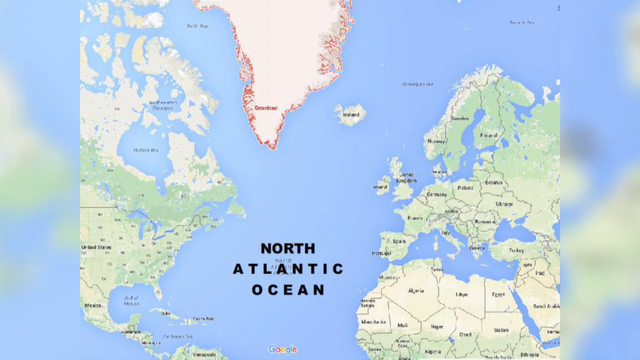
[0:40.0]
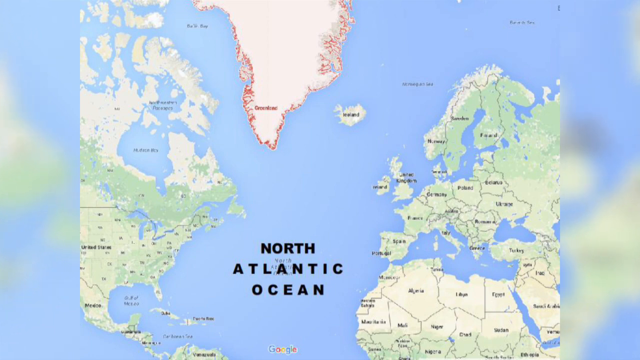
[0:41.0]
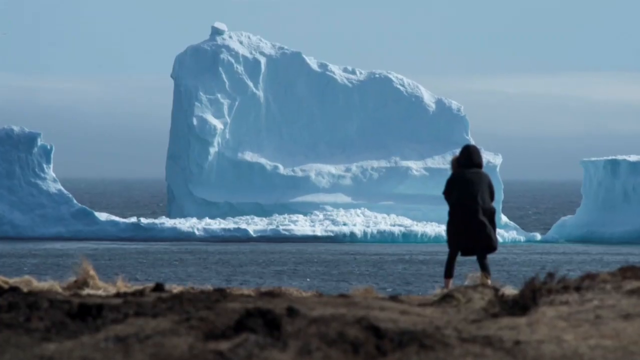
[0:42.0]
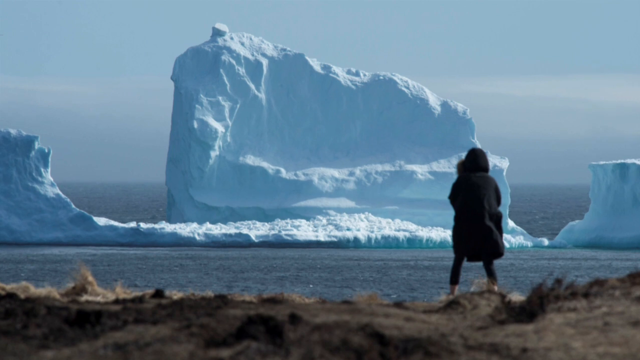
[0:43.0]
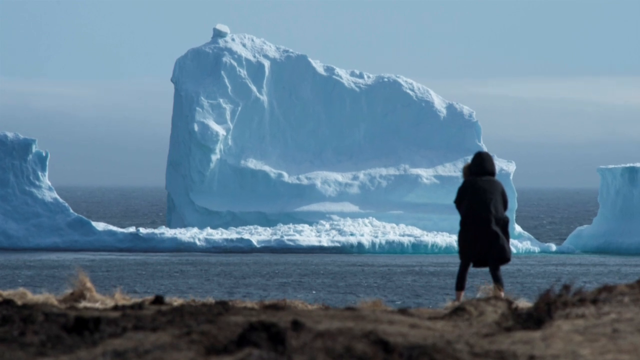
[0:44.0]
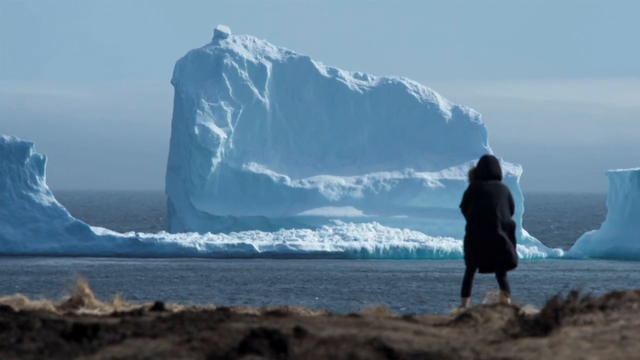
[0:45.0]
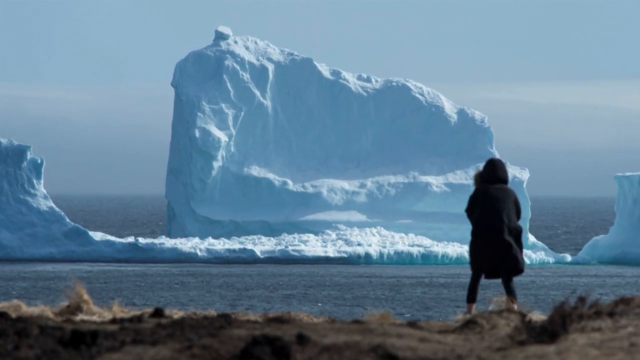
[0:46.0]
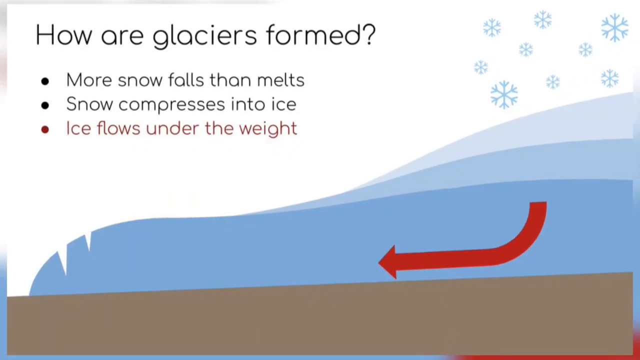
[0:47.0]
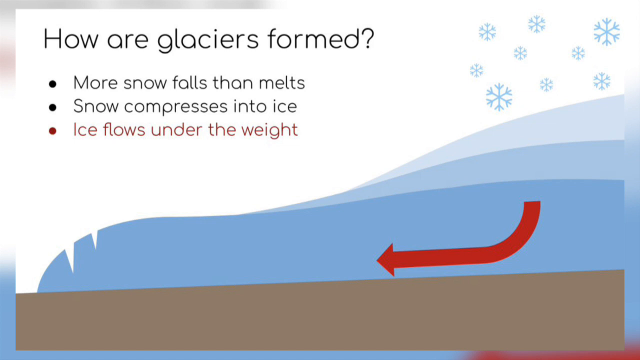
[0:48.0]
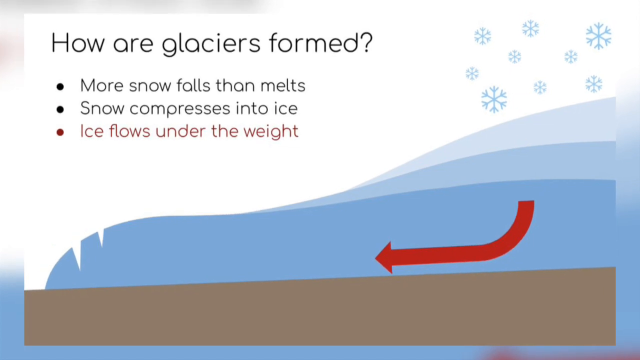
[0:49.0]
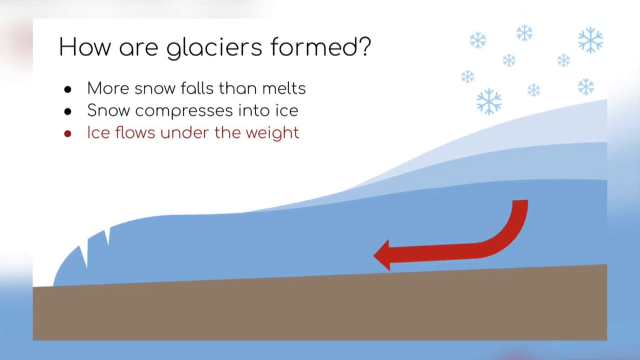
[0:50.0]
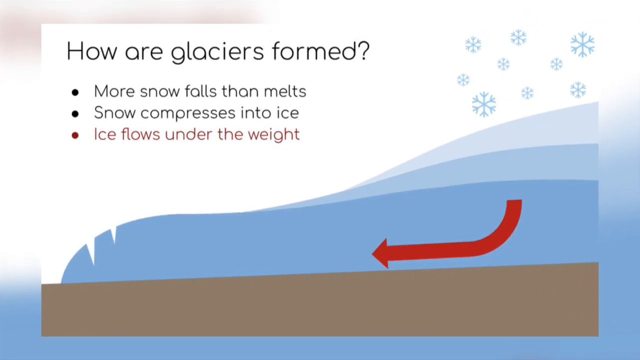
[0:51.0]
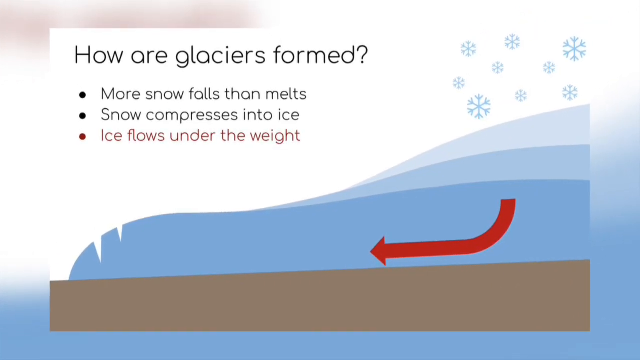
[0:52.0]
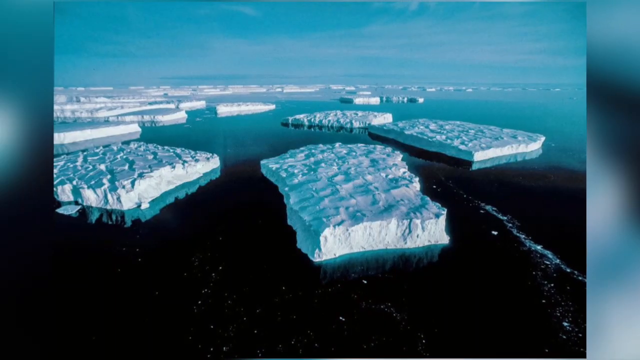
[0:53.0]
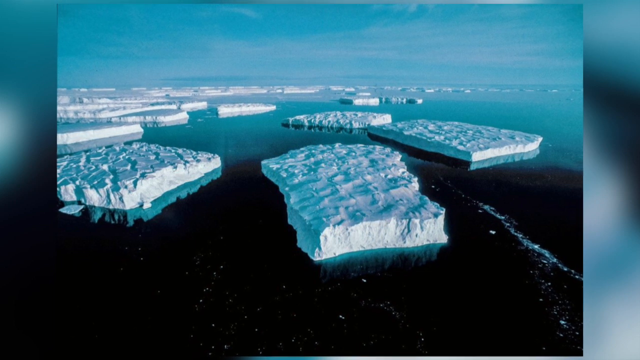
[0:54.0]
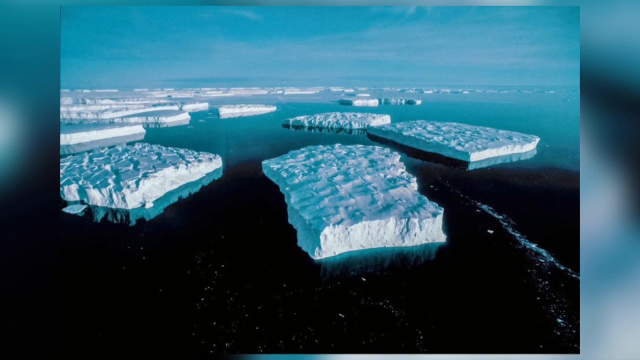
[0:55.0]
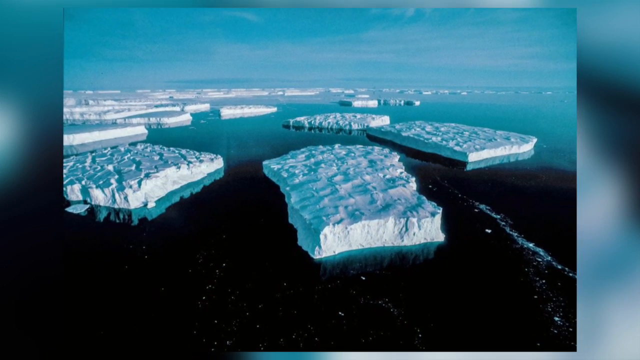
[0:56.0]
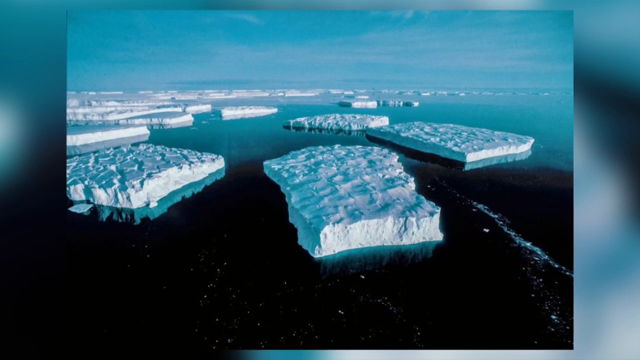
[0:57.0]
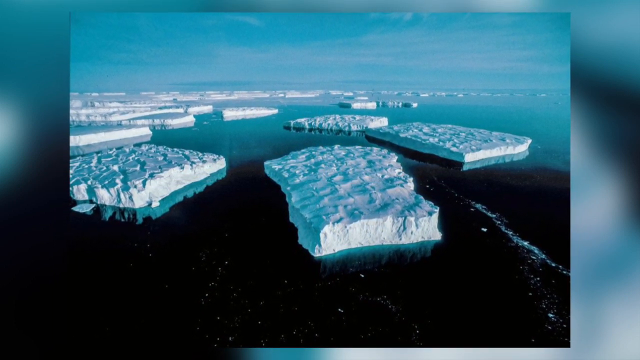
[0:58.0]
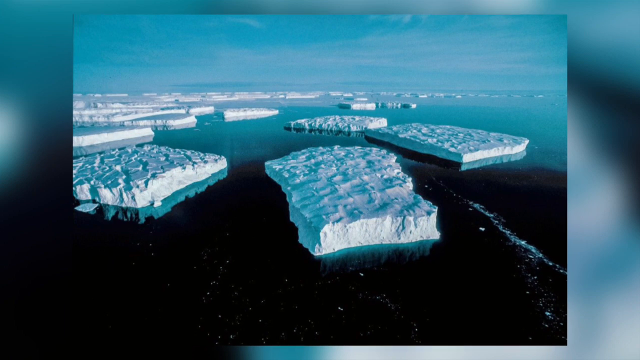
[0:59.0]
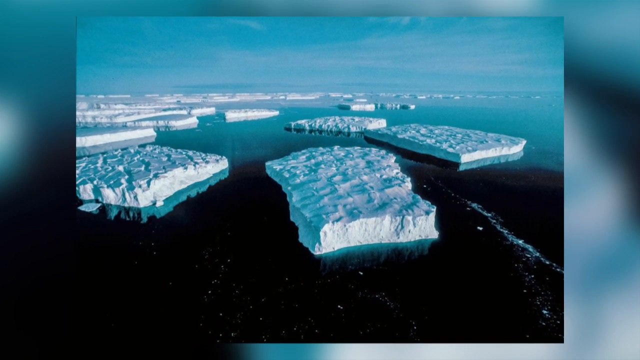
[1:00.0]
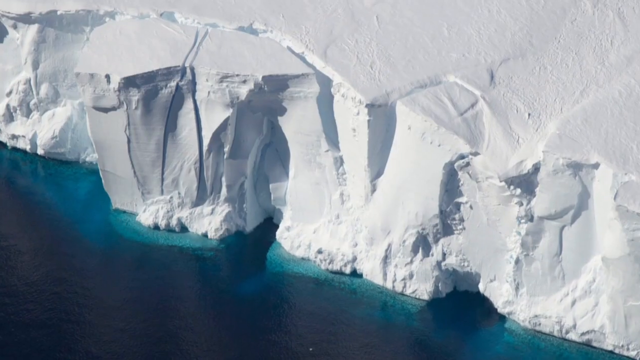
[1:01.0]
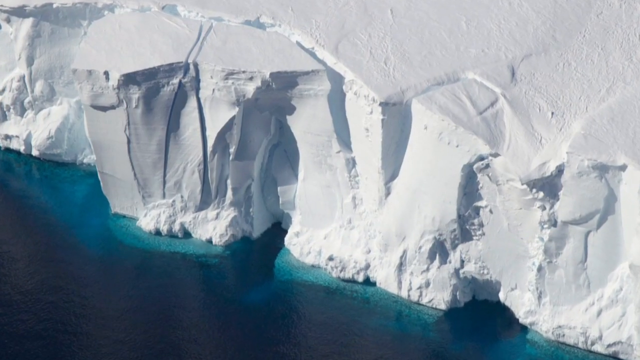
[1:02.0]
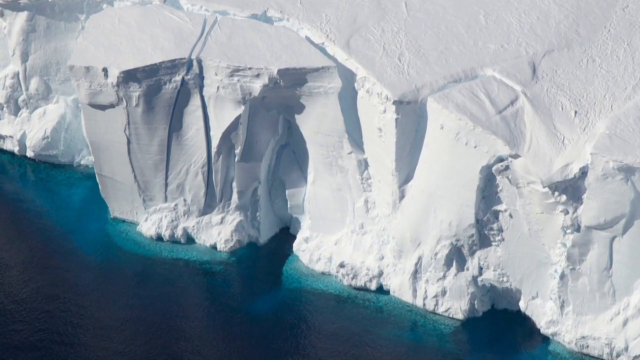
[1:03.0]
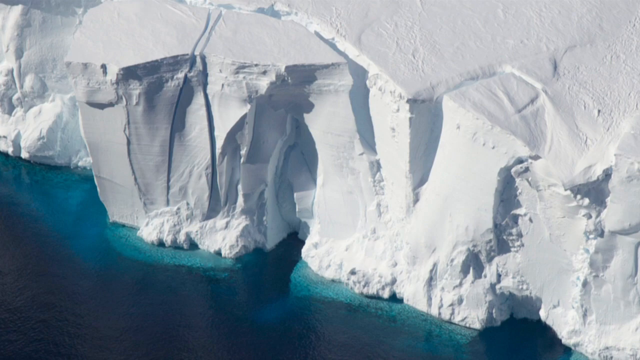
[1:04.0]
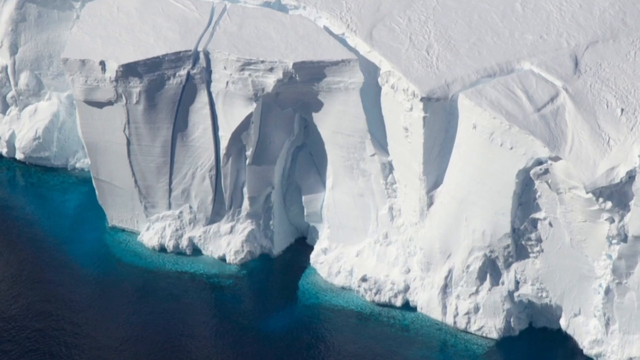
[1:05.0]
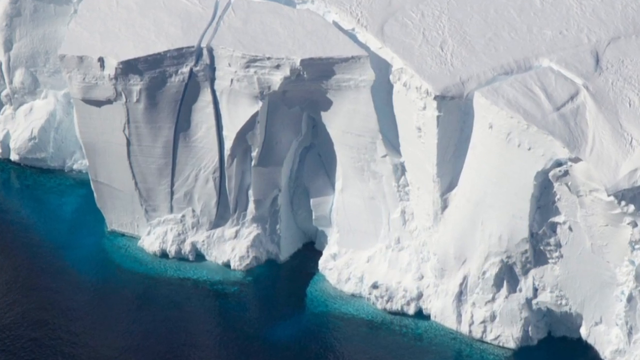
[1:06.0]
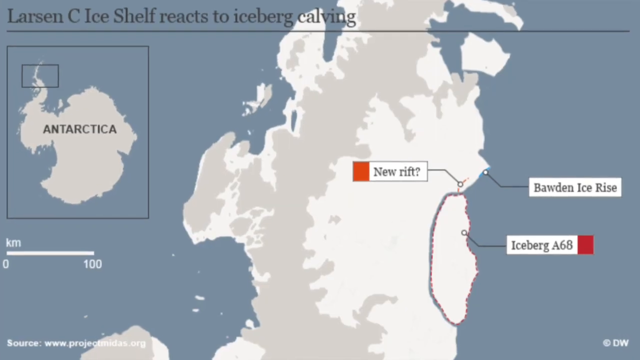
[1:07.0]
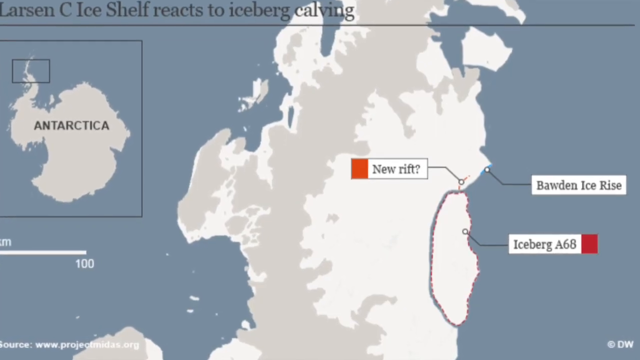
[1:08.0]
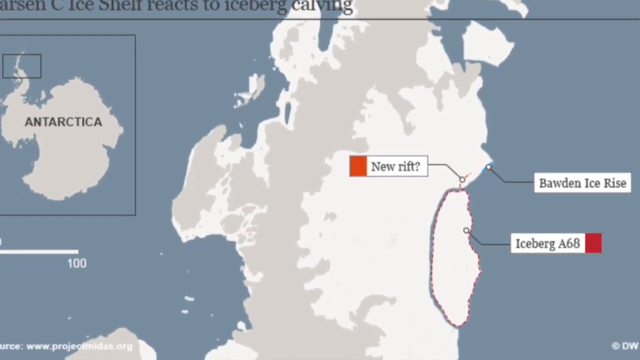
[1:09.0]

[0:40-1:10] An image shows a person standing in front of a gigantic iceberg, wearing a thick winter coat with the hood pulled up over their head. The giant iceberg is in the middle of the ocean with two smaller icebergs to either side. A page then appears with the title "How are glaciers formed?" and three bullet points underneath: the top one reads "snow falls then melts", the second "snow compresses into ice" and the third "ice flows under the weight". There is also an illustration of the sea, with ice and snowflakes illustrated at the top right of the image and a large red arrow near the bottom. Next, an image shows several large, flat, rectangular icebergs in the middle of the ocean, and a large iceberg is shown from a side camera angle. A map then appears with the name "Antarctica" in large black text on the left of the image.